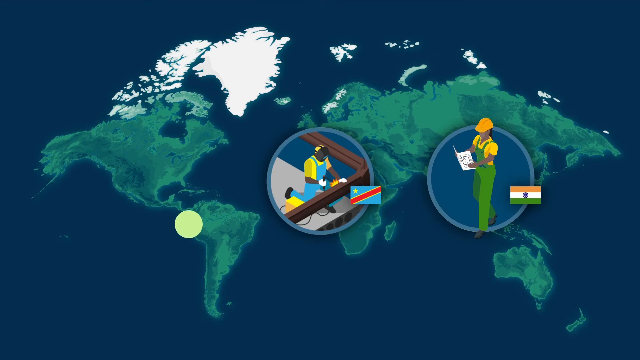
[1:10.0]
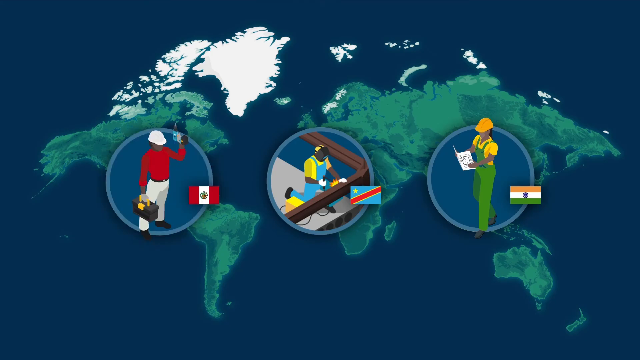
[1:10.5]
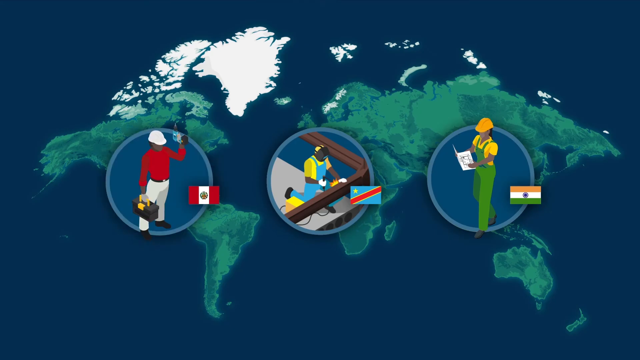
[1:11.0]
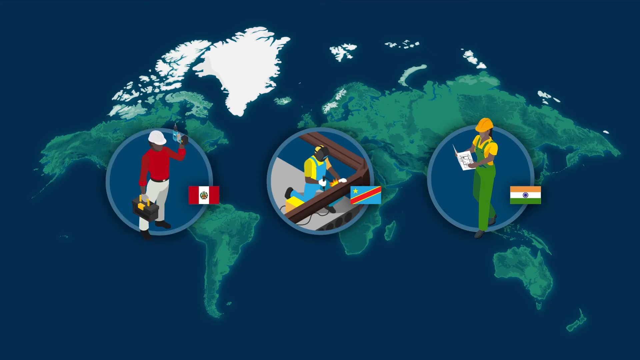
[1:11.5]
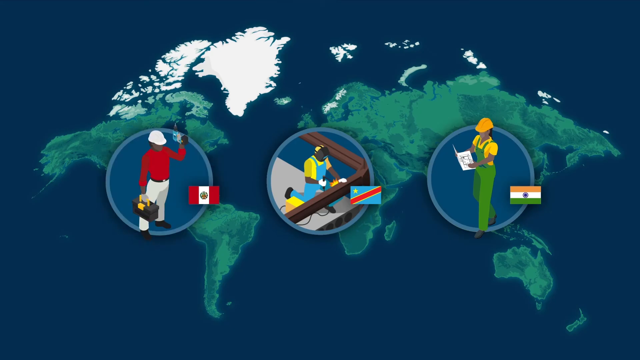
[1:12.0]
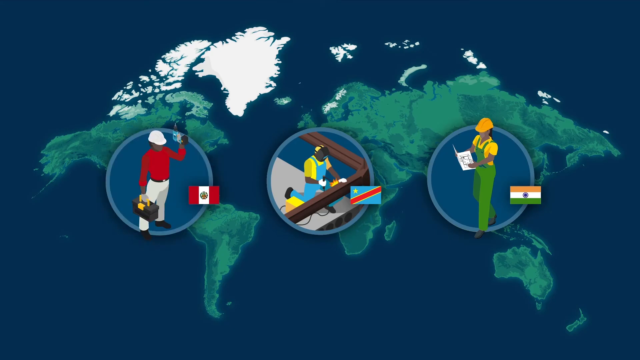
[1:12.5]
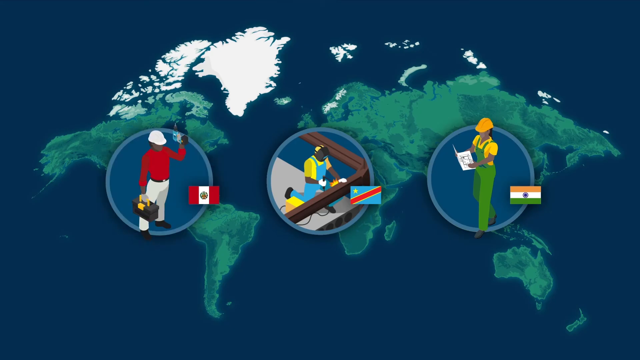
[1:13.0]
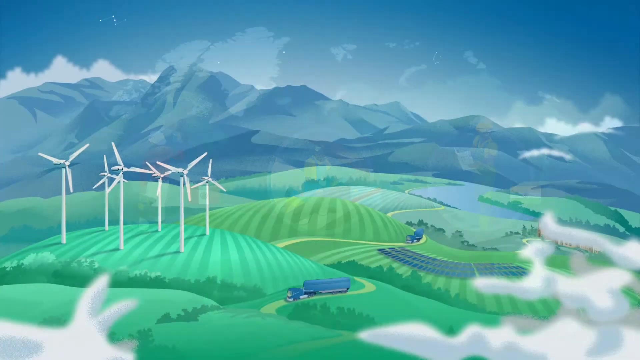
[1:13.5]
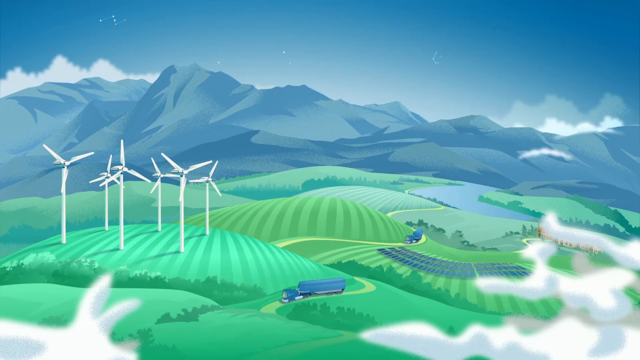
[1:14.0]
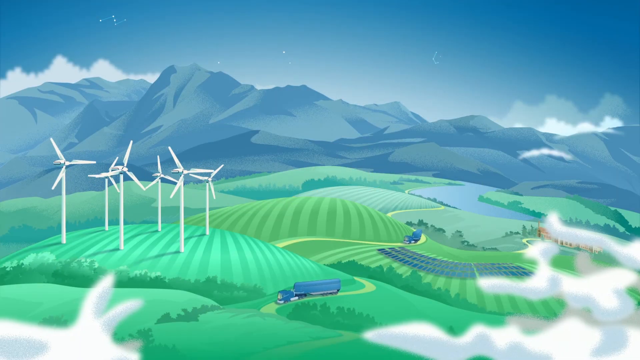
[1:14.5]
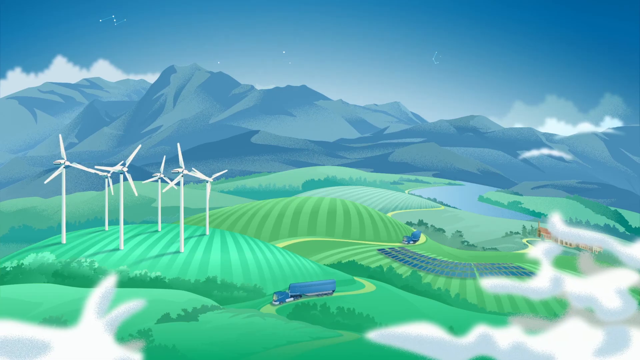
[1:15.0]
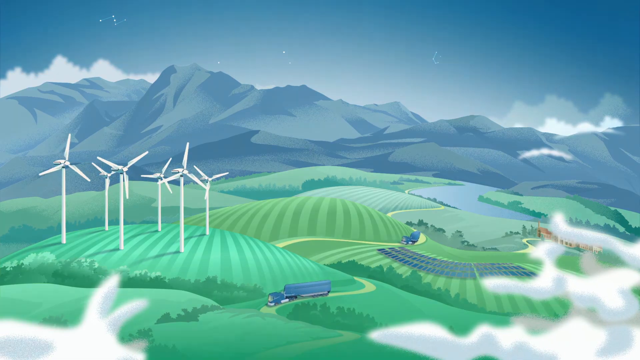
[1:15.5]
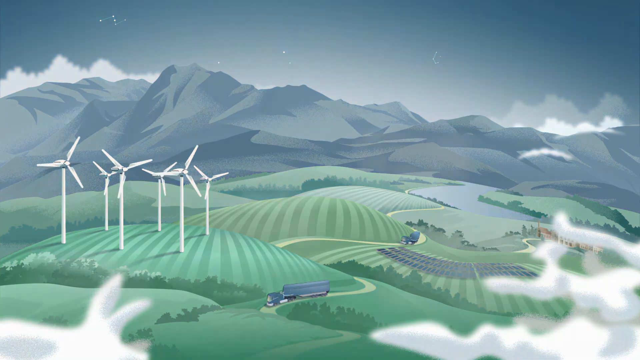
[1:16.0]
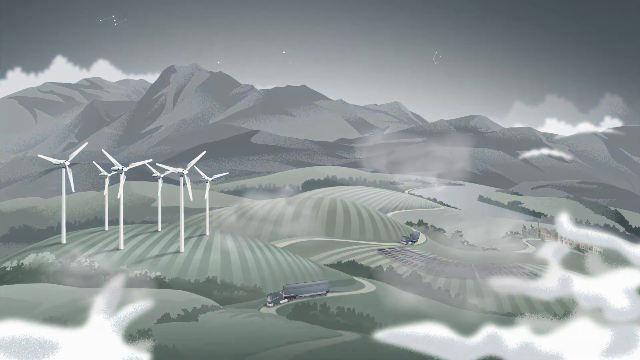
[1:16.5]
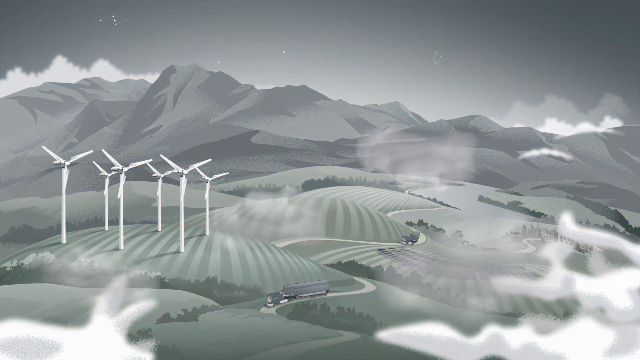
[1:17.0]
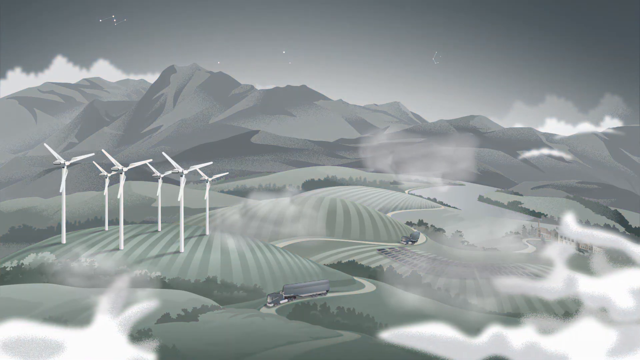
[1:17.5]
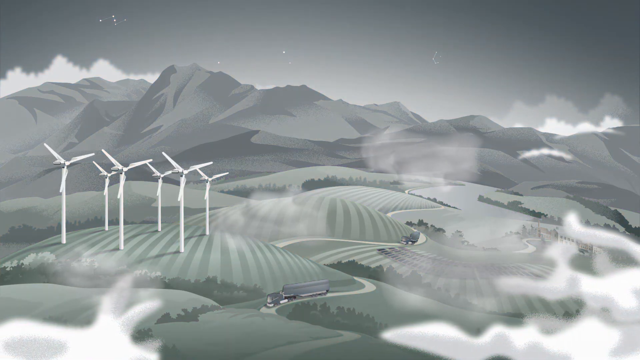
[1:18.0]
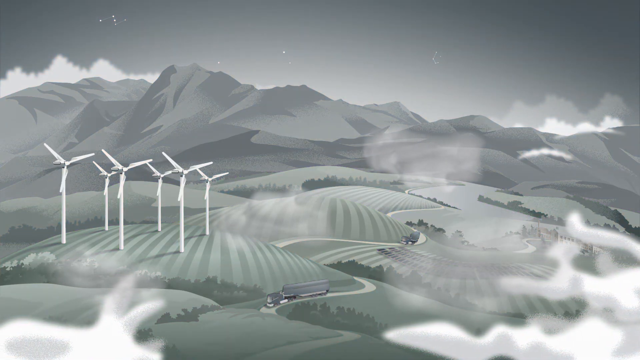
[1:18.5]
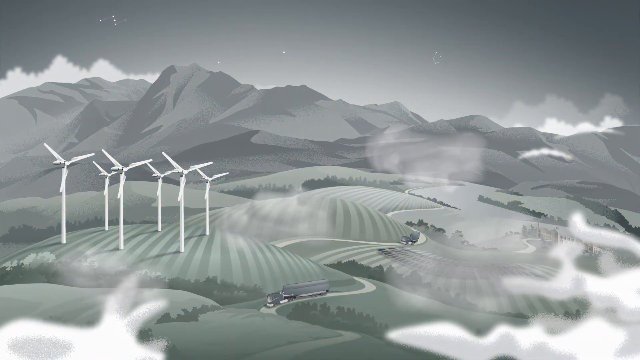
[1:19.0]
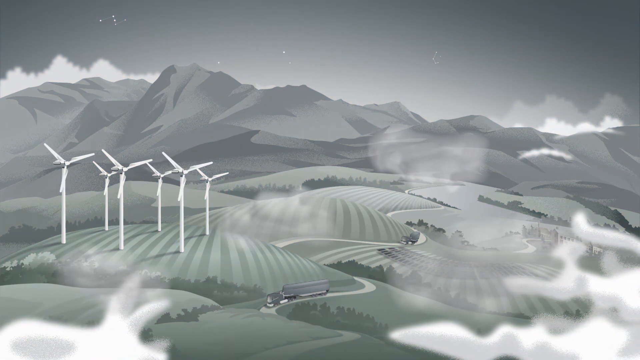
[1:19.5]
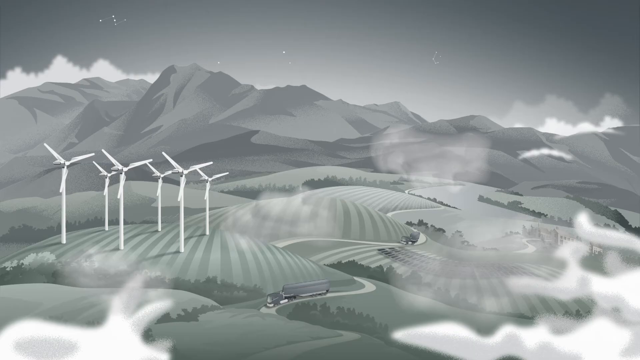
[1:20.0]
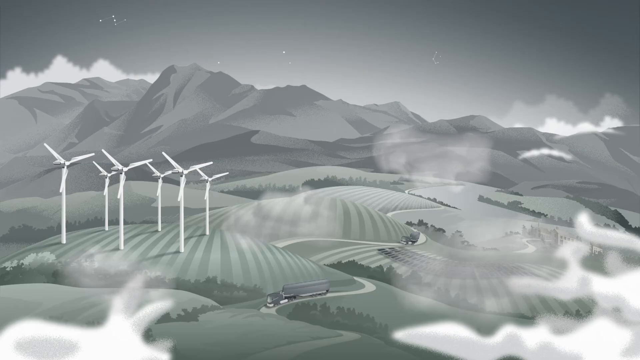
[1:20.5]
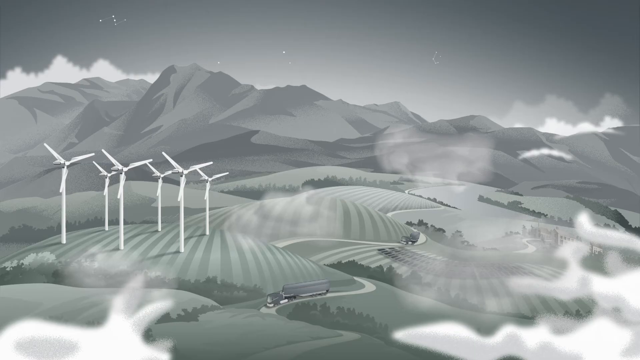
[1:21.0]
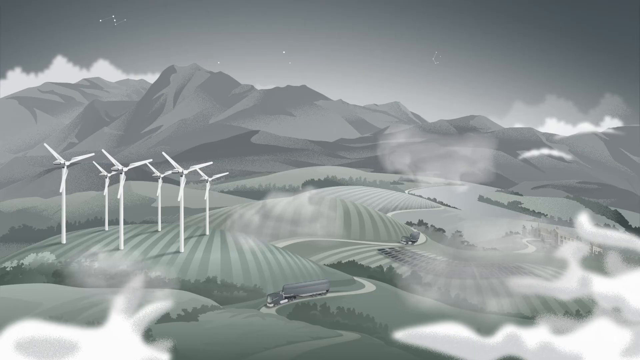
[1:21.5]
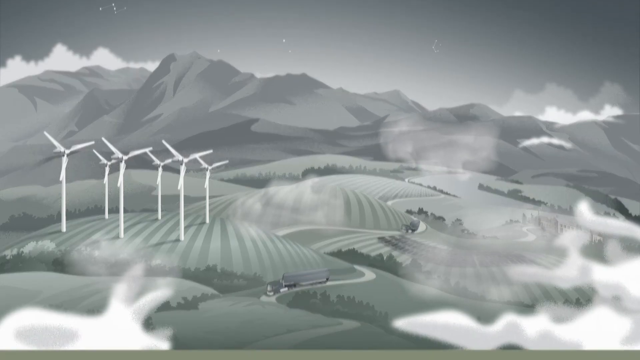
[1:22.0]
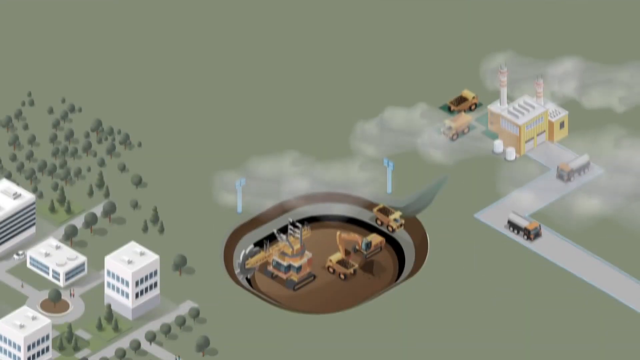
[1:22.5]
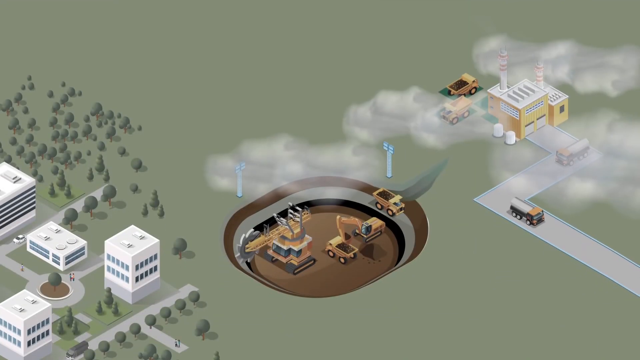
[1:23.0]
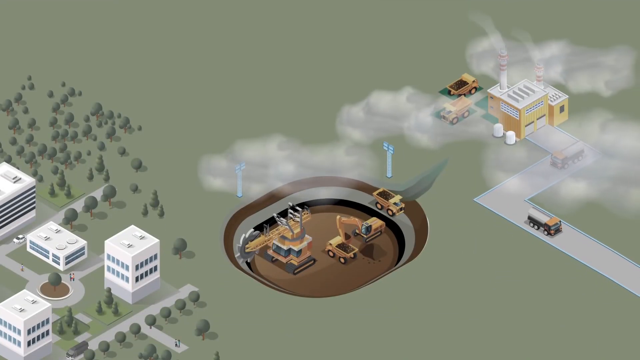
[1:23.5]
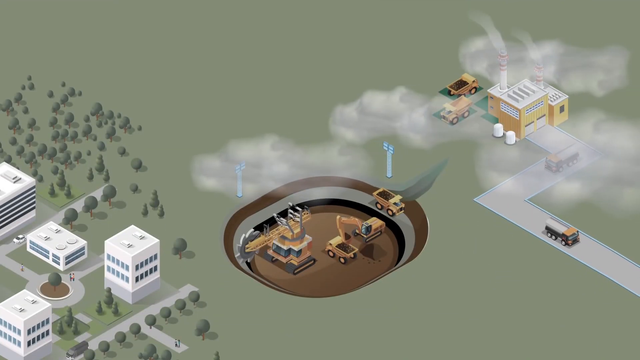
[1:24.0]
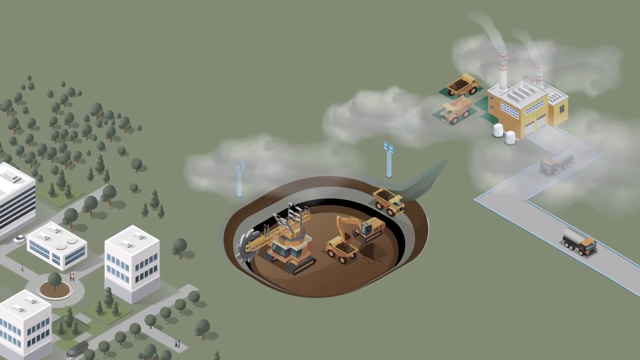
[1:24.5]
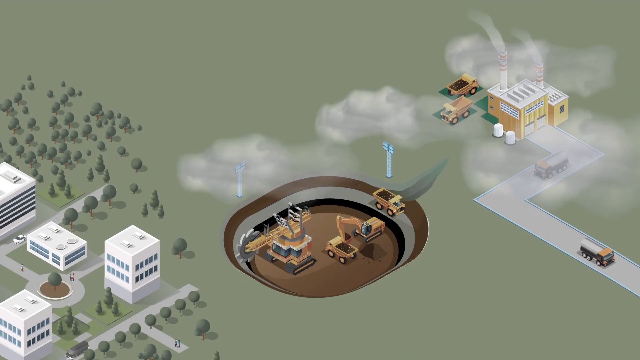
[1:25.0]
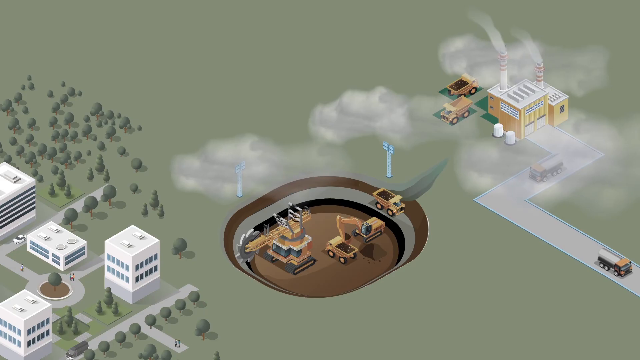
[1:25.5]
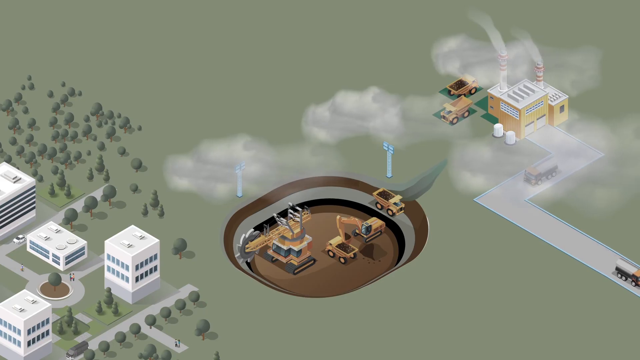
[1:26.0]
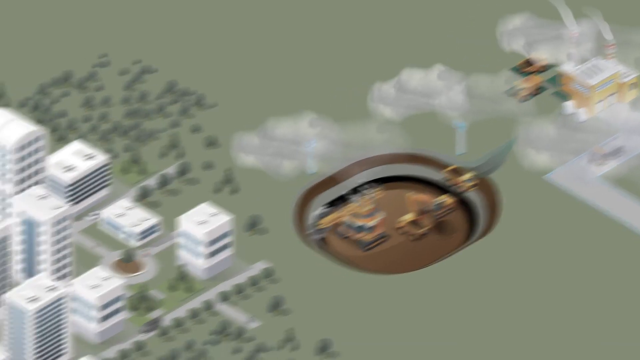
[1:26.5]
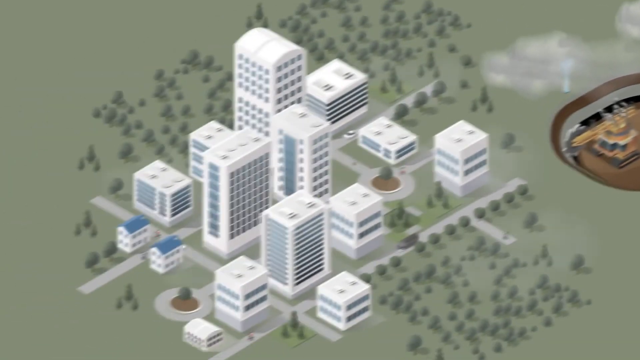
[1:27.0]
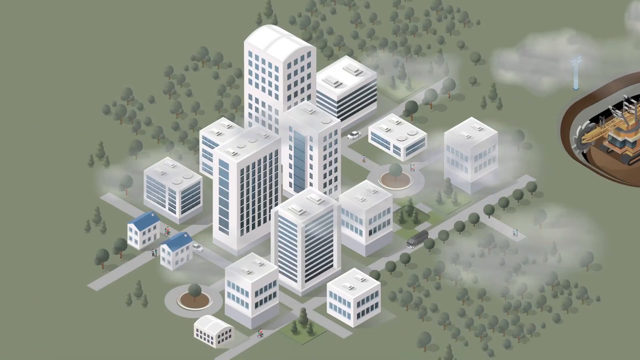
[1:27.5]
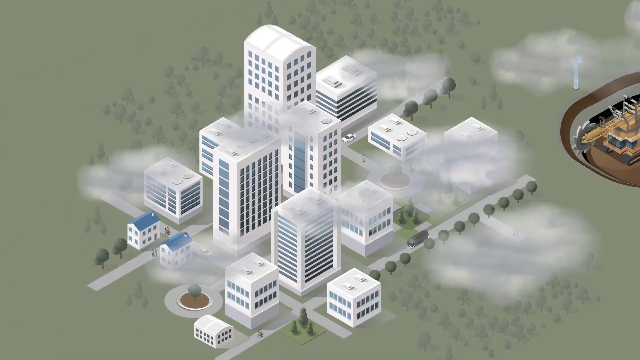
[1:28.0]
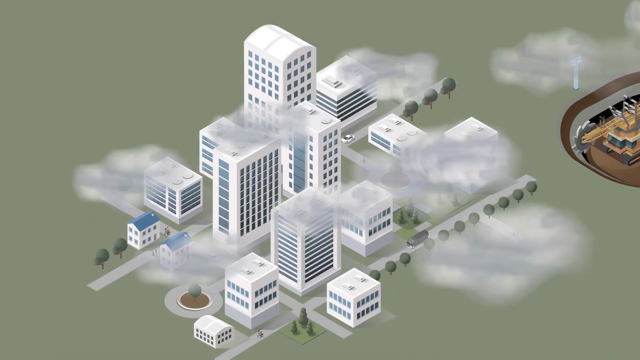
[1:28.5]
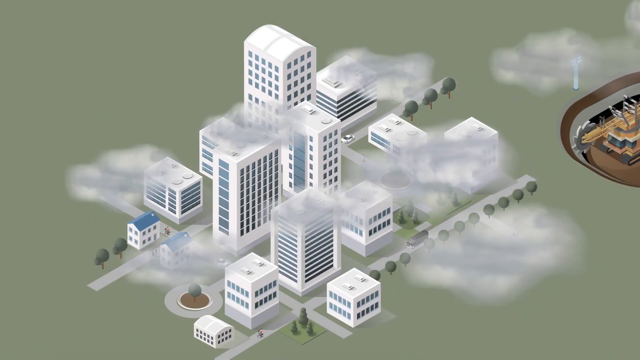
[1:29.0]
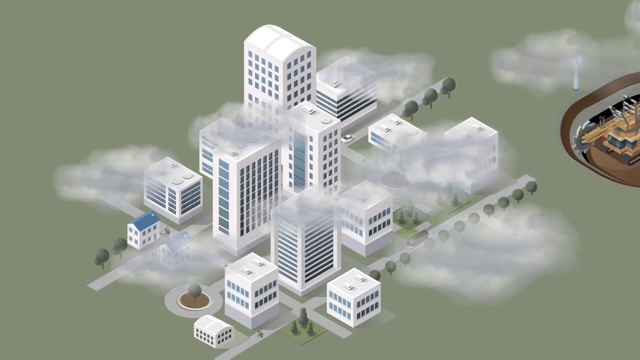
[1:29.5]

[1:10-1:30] A map of different countries appears with two circles over it containing drawings of people in construction uniforms, representing different parts of the world. One appears to be a man working on something unclear, possibly a fence. The other is a woman in a yellow construction helmet holding some kind of manual. Another person is added in another part of the map: a man in a white helmet, red shirt and white pants, holding some kind of utility bag and raising something unidentifiable in one hand. The view returns to the valley with windmills, a river, mountains, clouds and fields, which turns from green to black and white as the clouds move; there also looks to be a tanker truck down below. Then a construction site appears with construction vehicles, including a dump truck and possibly a cement truck. At the side there appear to be white offices with windows, and there are more construction vehicles and dump trucks, maybe a warehouse where the dump trucks are kept, and a street with different trucks riding on it. The view then focuses on the rest of the city, with many white buildings.